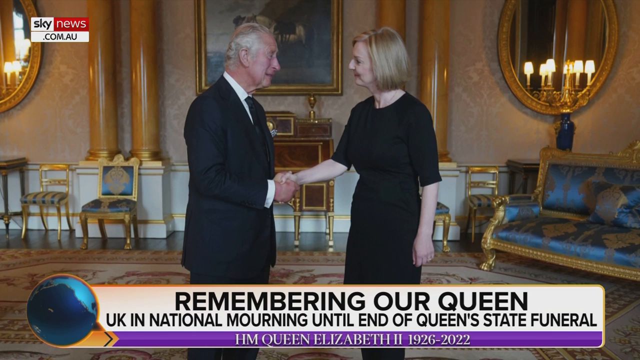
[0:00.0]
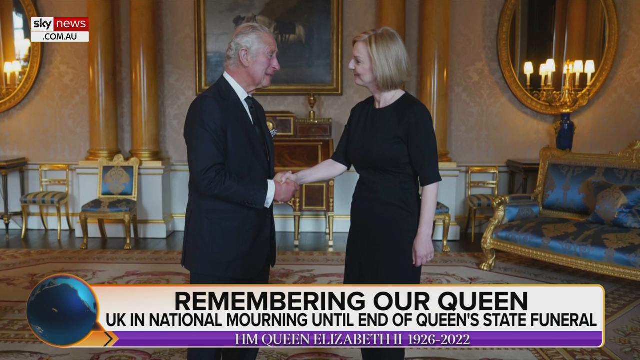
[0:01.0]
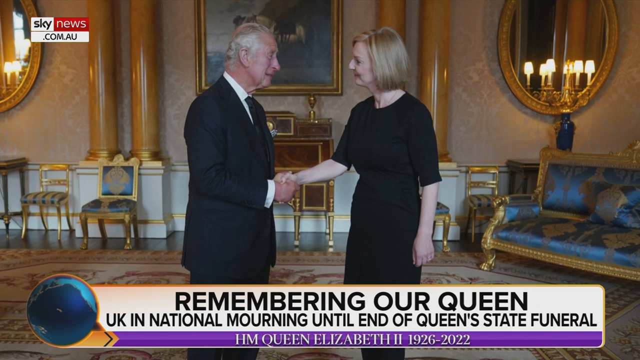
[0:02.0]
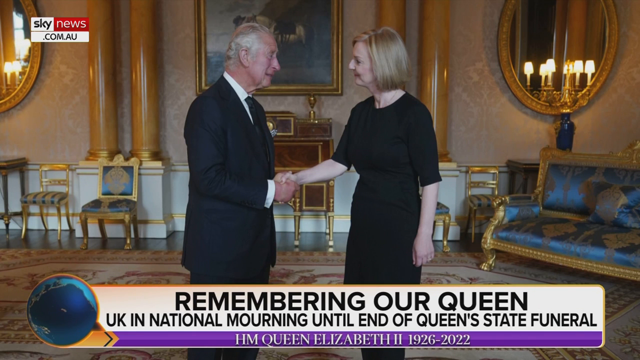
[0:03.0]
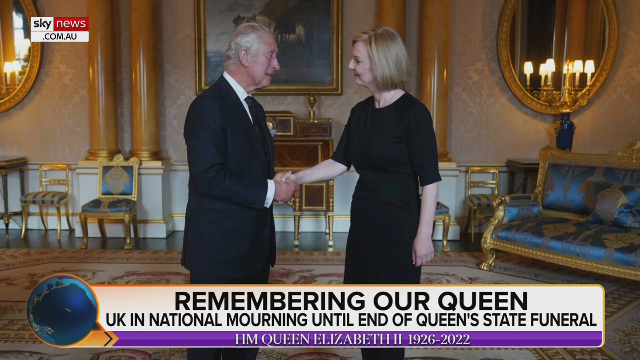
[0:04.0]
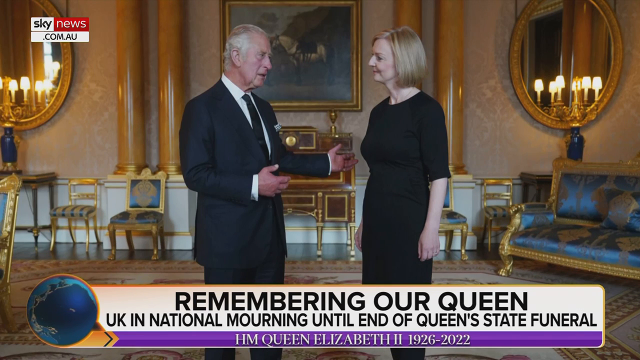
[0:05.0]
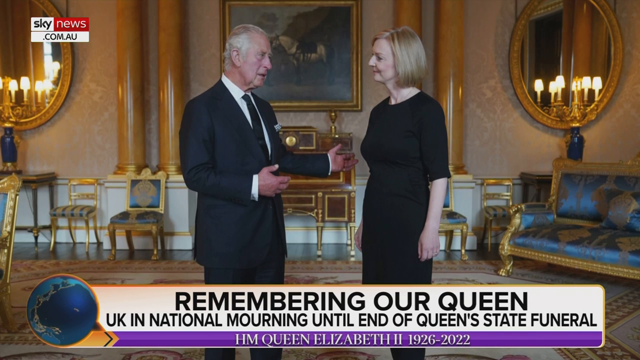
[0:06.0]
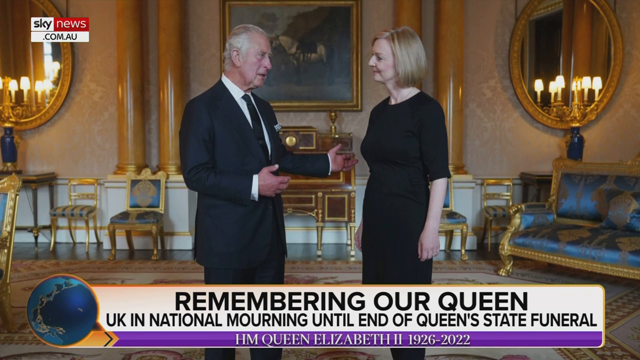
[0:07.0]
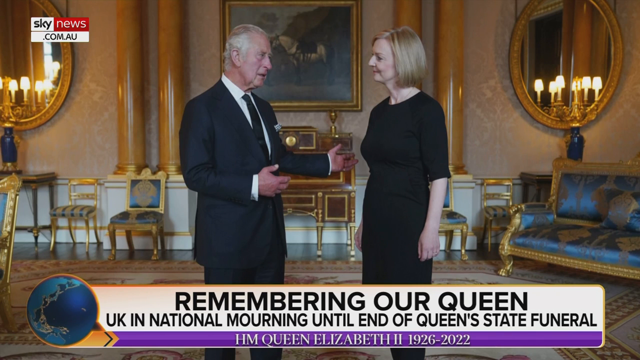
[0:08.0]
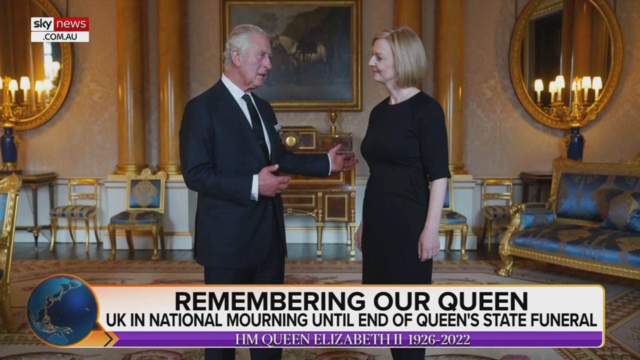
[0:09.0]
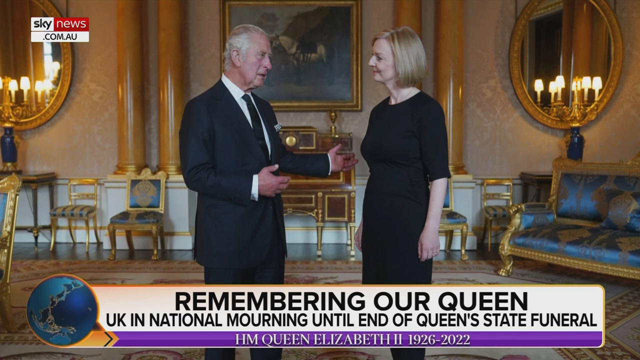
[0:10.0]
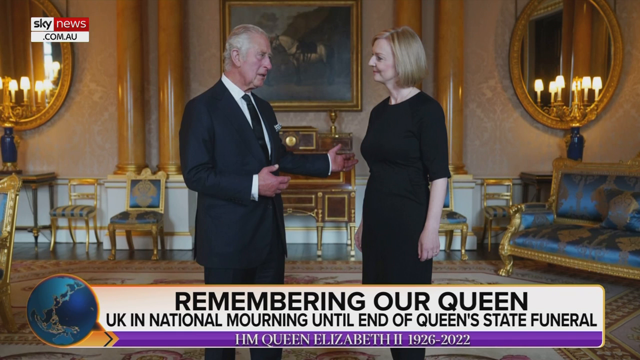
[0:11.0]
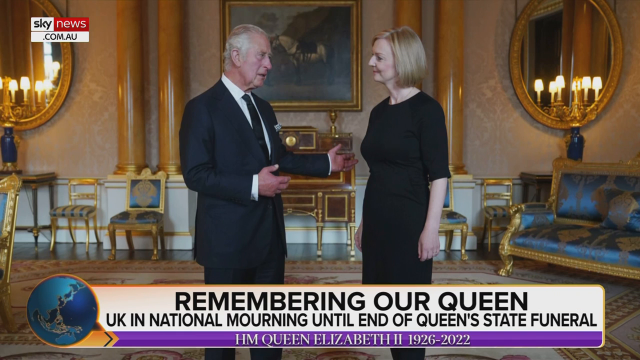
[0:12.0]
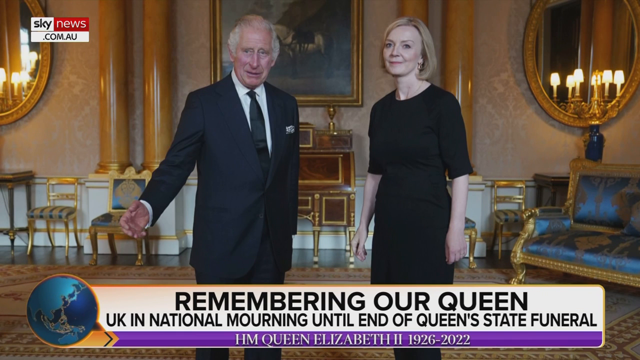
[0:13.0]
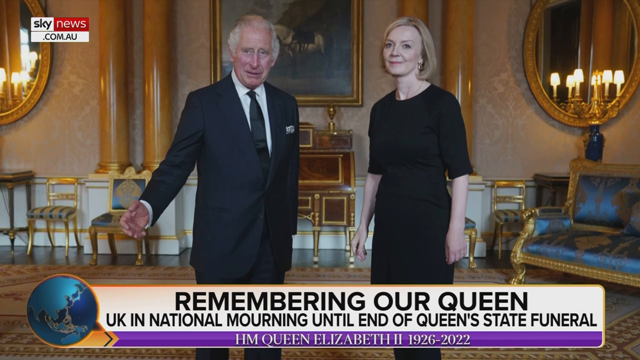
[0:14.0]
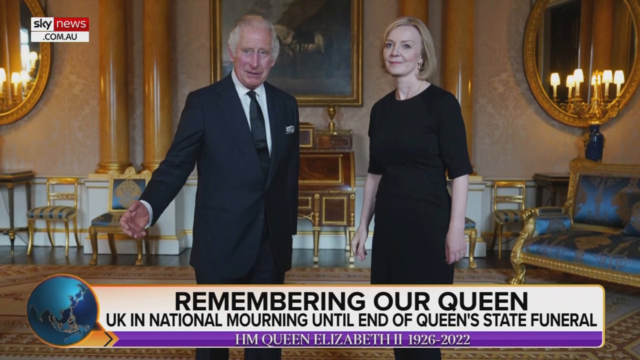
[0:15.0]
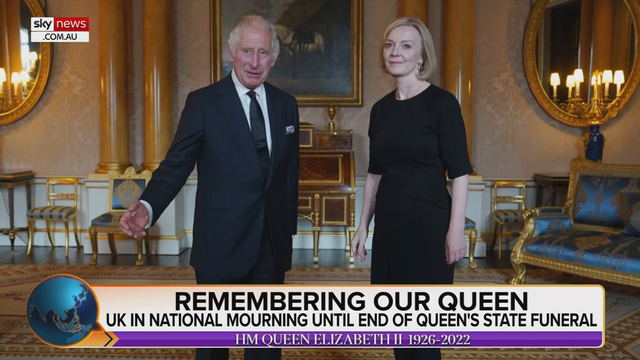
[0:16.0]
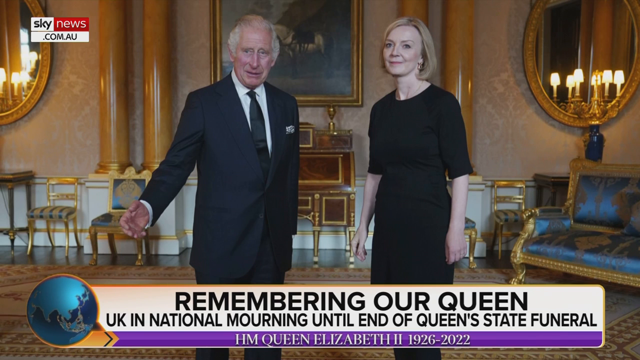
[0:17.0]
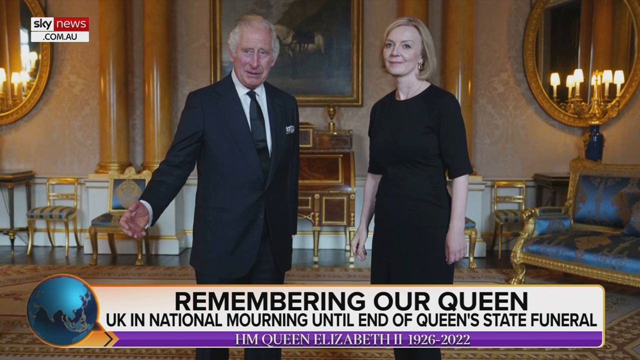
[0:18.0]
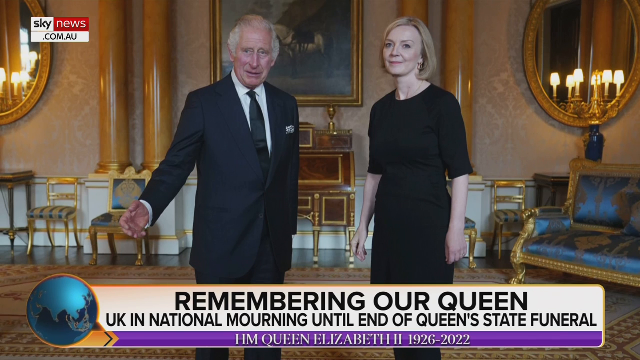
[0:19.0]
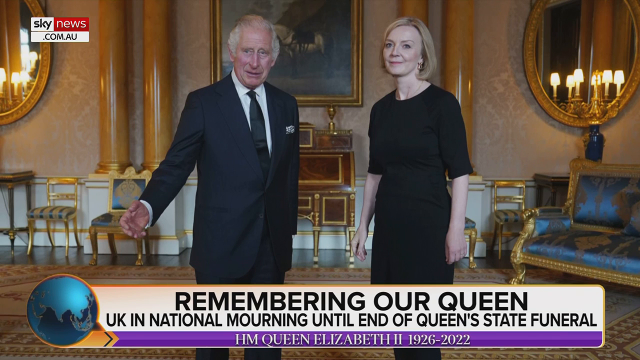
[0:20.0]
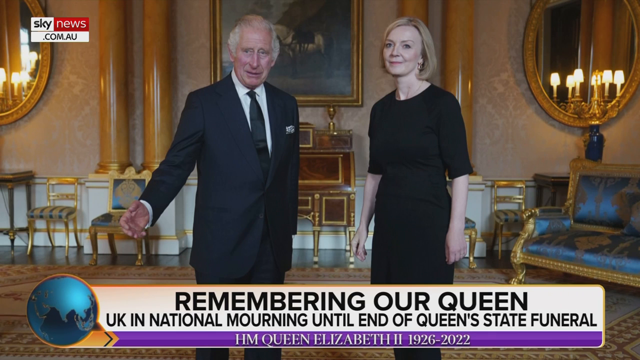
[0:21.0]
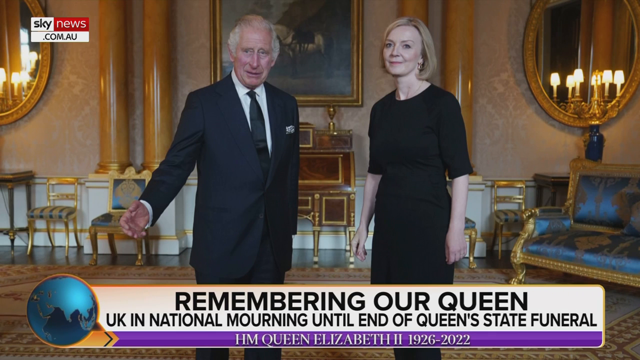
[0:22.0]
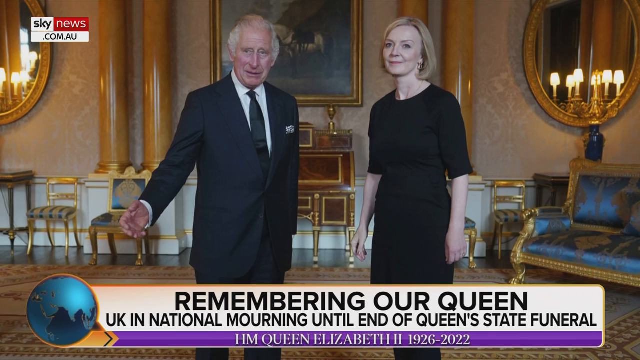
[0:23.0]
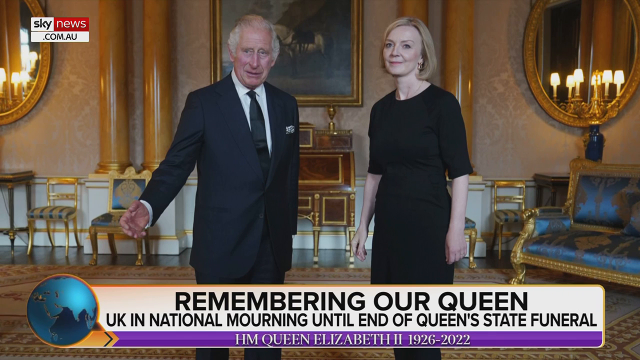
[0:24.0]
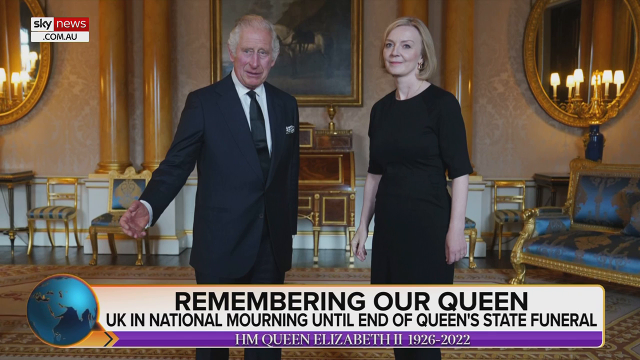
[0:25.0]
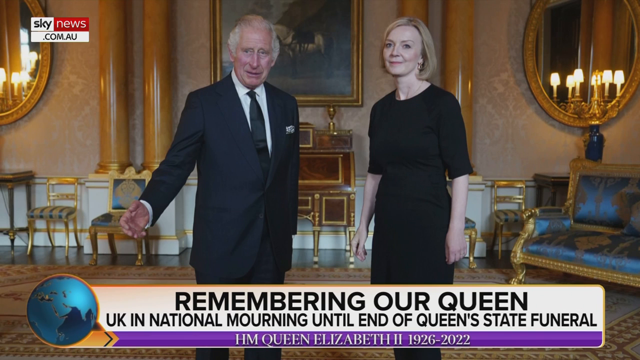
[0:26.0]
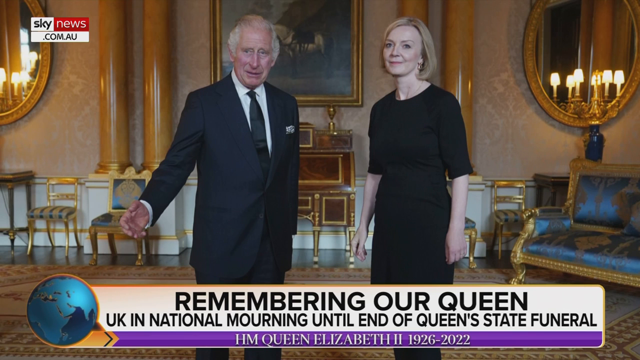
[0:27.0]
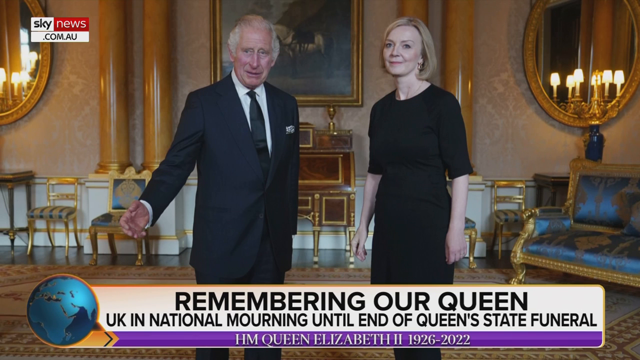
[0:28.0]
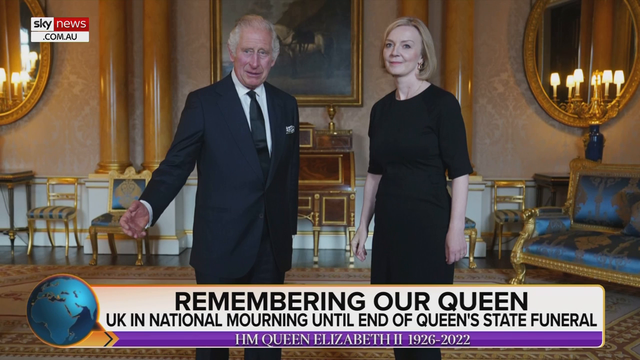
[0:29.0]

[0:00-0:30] The video appears to be a news story about Queen Elizabeth. In the top left is the Sky News logo, and the text "SkyNews.com.au" appears, suggesting this is possibly Sky News in Australia. The frame shows a picture of King Charles of the United Kingdom shaking hands with a woman who appears to be middle-aged, maybe slightly older, with blonde hair and a black dress; she possibly resembles Liz Truss, a former prime minister. The room appears very opulent and expensive-looking, with gold fixtures, gold chairs and rugs, and it looks like the king's palace. A graphic along the bottom reads "Remembering our Queen". The pictures appear to be stills, moving from one still to the next.